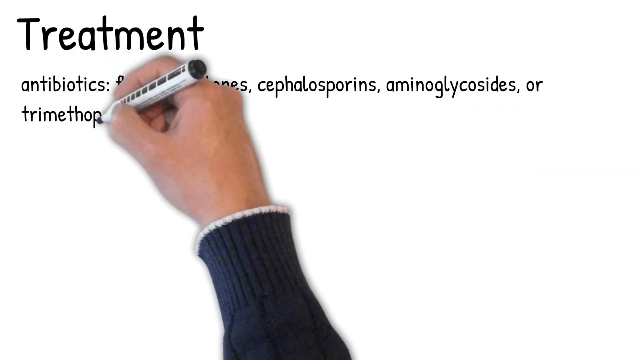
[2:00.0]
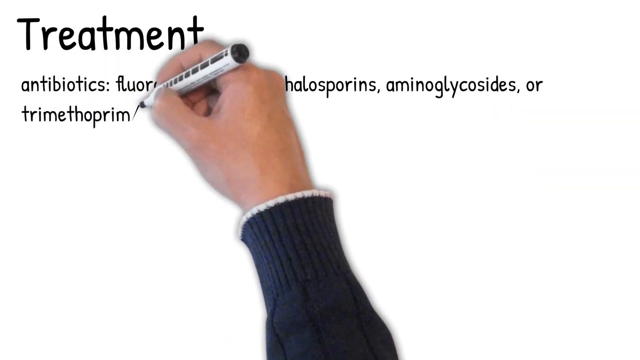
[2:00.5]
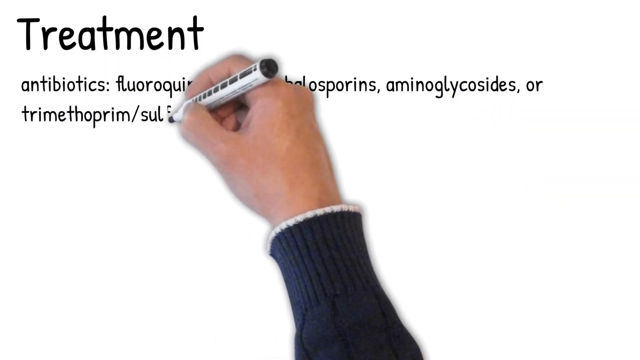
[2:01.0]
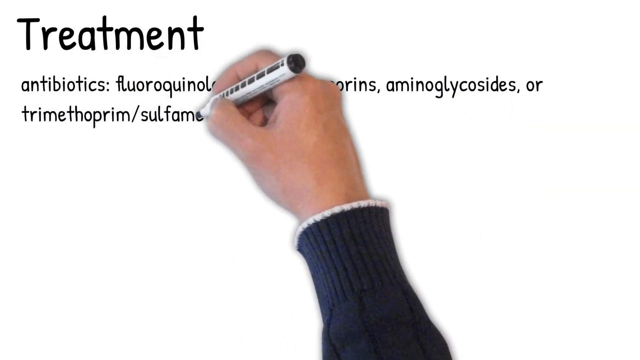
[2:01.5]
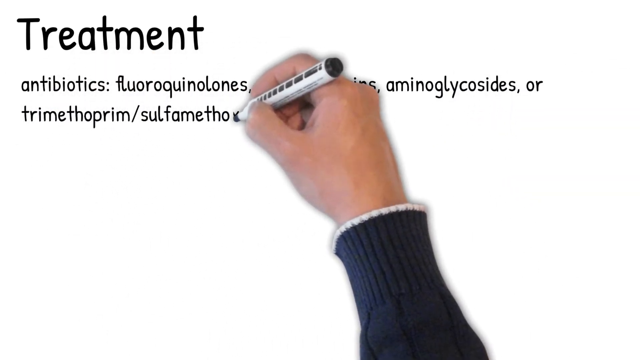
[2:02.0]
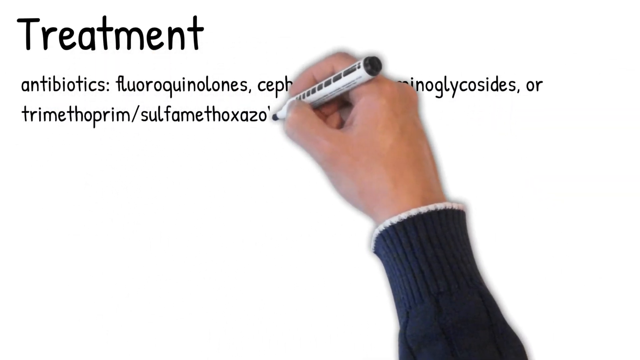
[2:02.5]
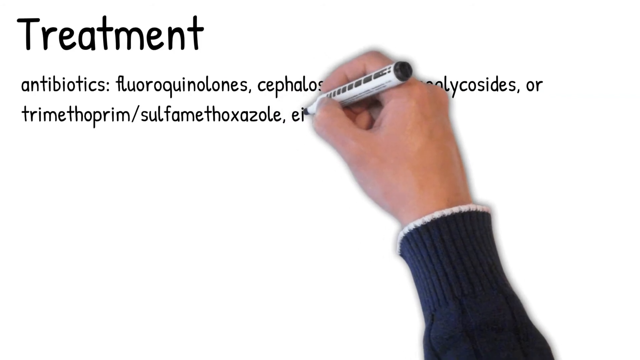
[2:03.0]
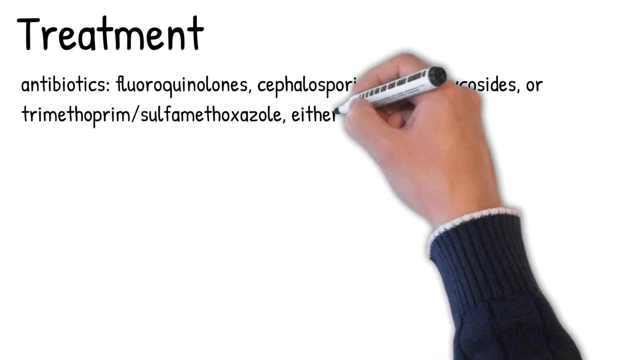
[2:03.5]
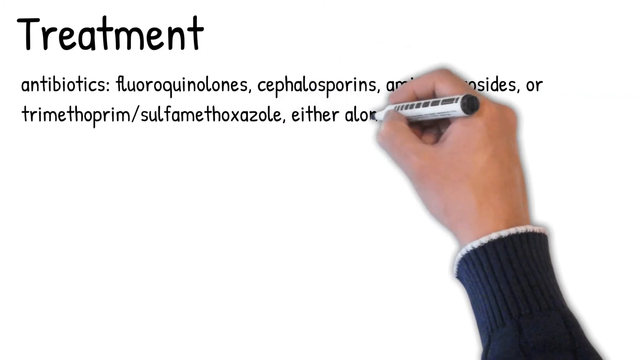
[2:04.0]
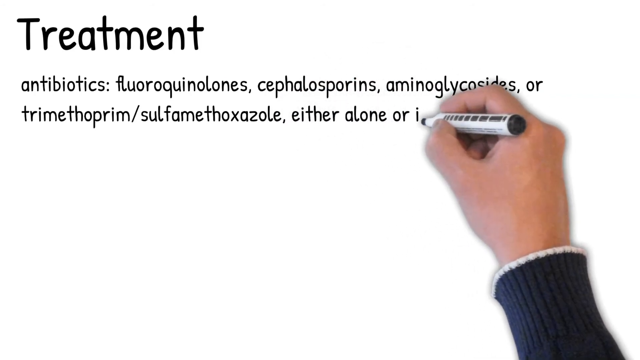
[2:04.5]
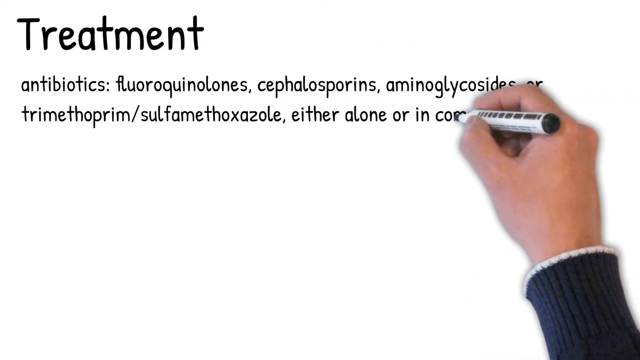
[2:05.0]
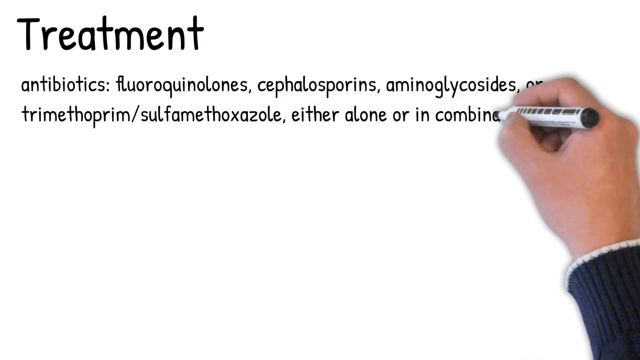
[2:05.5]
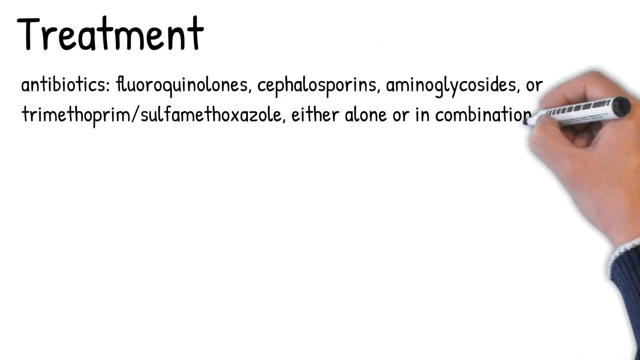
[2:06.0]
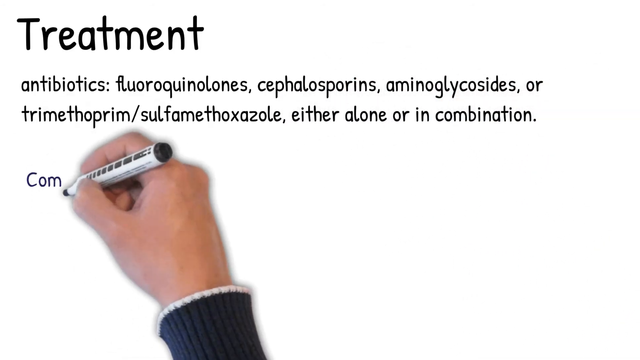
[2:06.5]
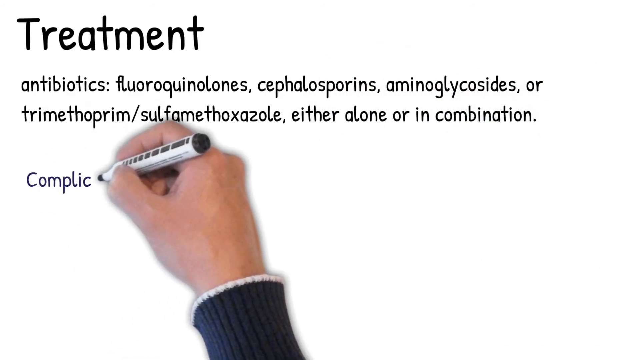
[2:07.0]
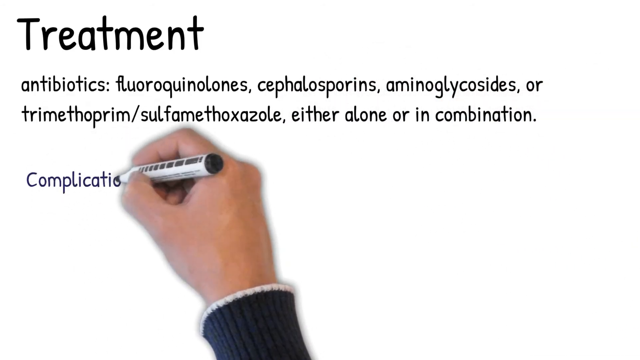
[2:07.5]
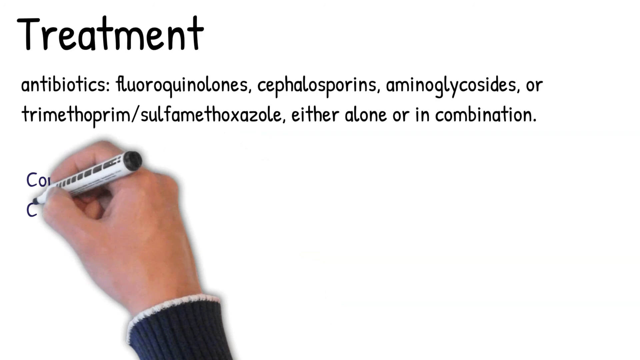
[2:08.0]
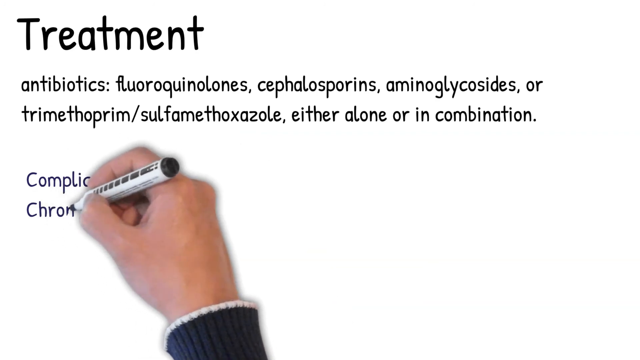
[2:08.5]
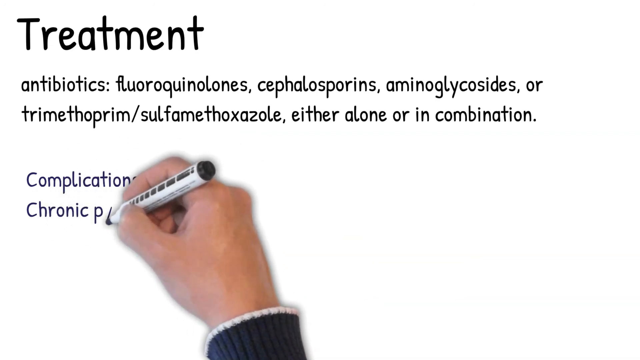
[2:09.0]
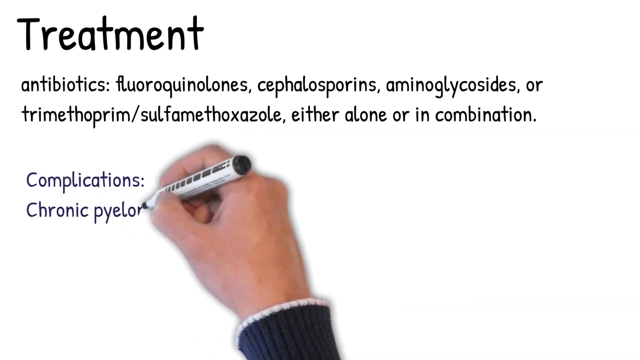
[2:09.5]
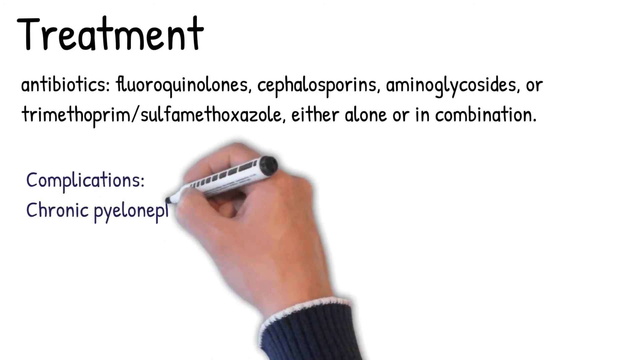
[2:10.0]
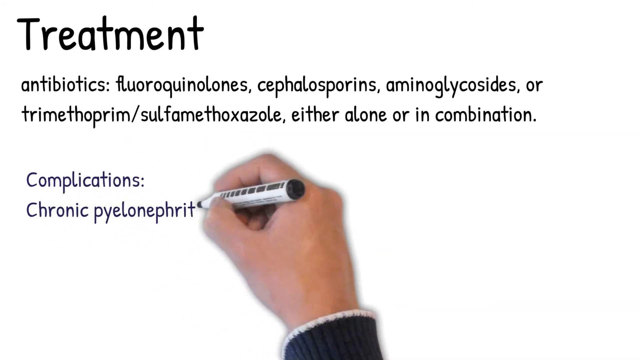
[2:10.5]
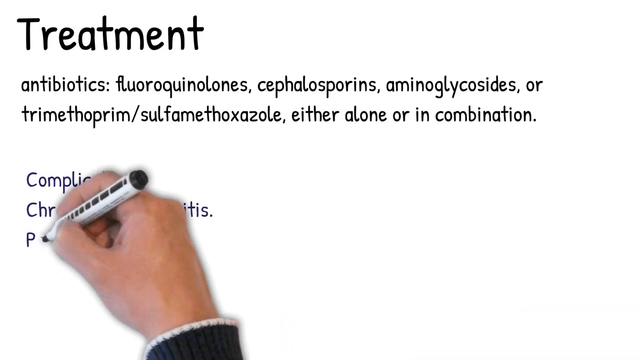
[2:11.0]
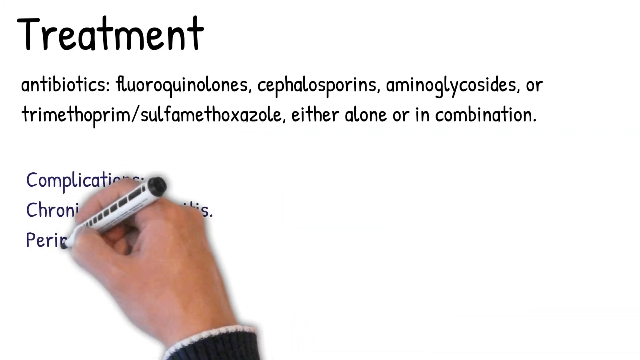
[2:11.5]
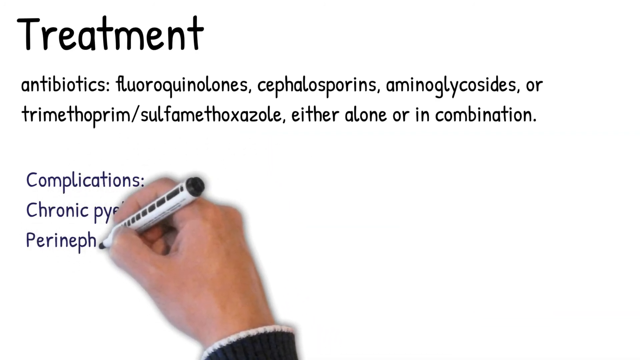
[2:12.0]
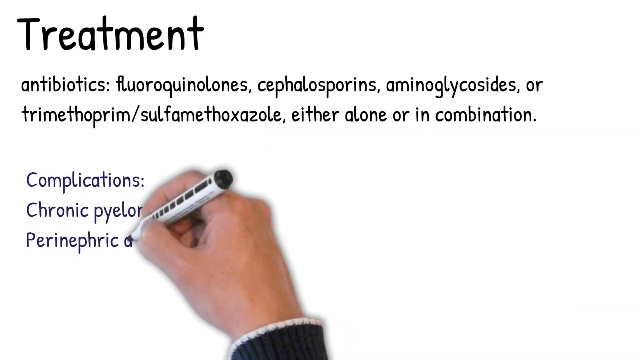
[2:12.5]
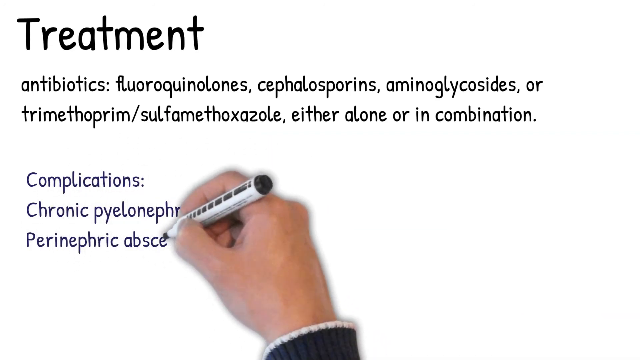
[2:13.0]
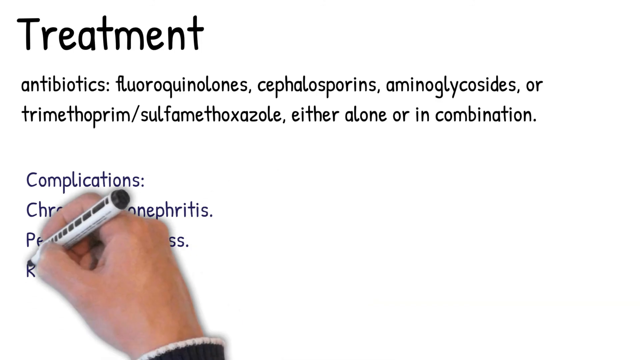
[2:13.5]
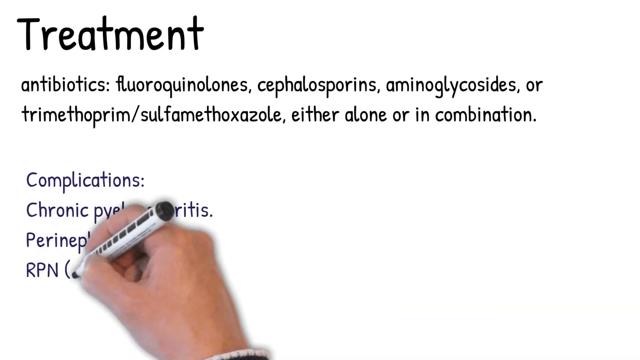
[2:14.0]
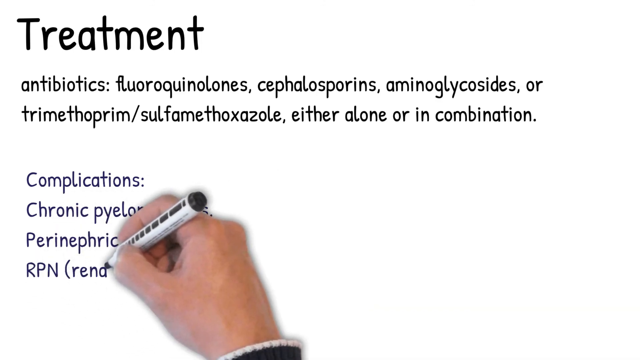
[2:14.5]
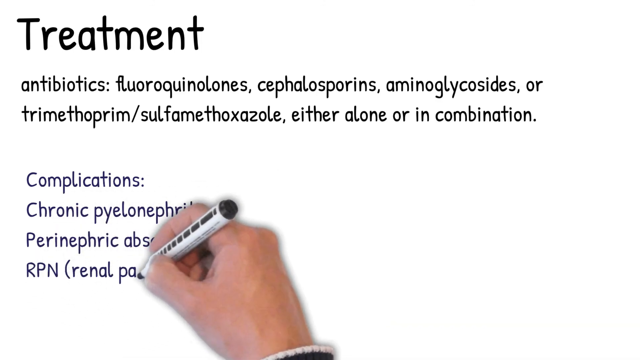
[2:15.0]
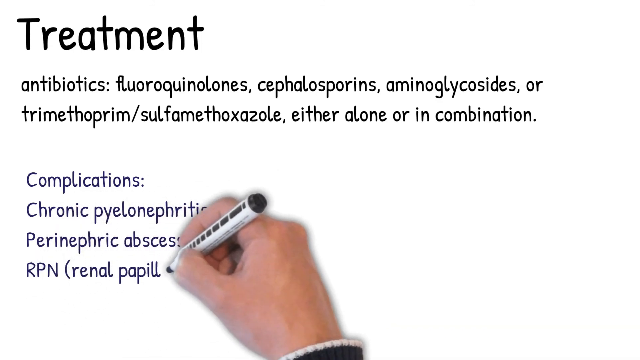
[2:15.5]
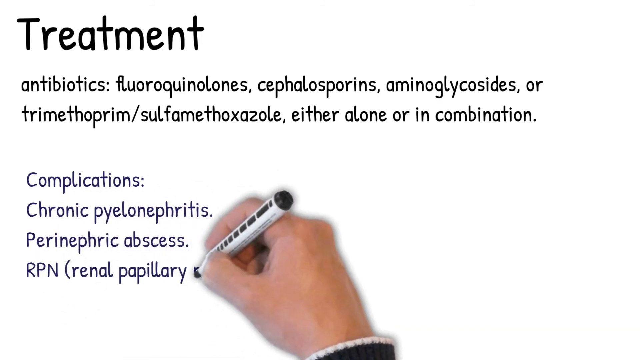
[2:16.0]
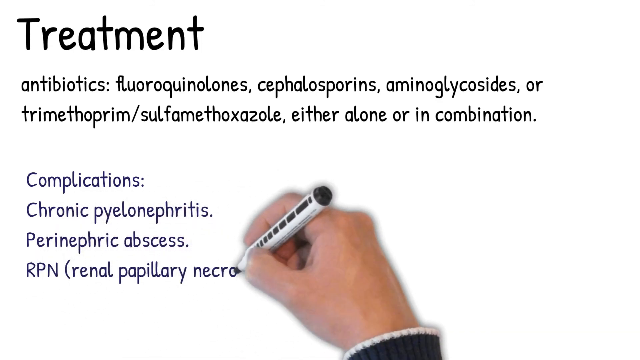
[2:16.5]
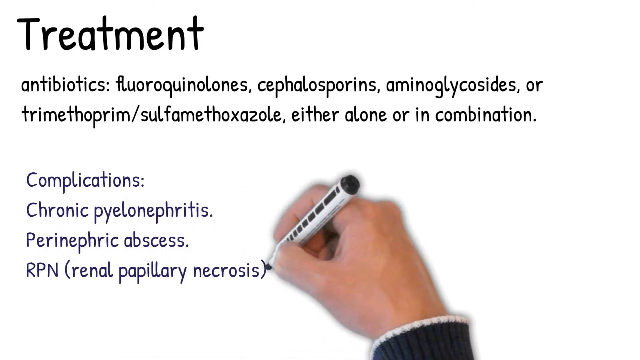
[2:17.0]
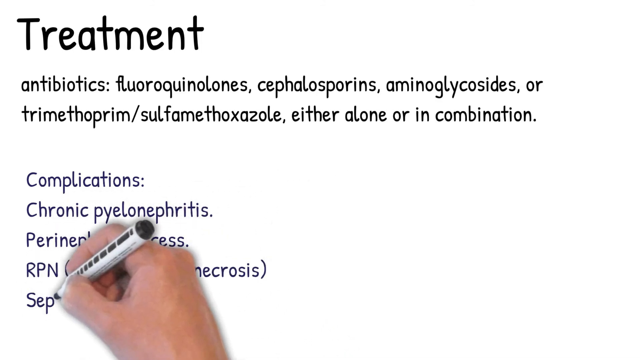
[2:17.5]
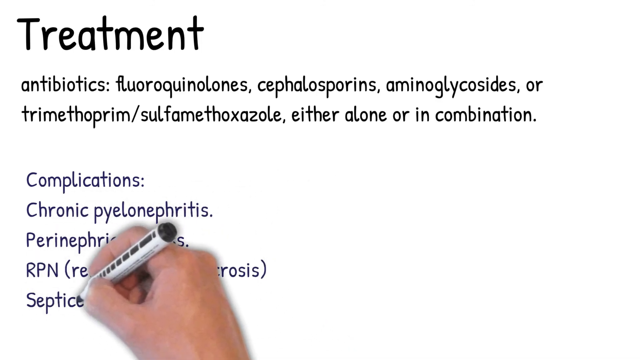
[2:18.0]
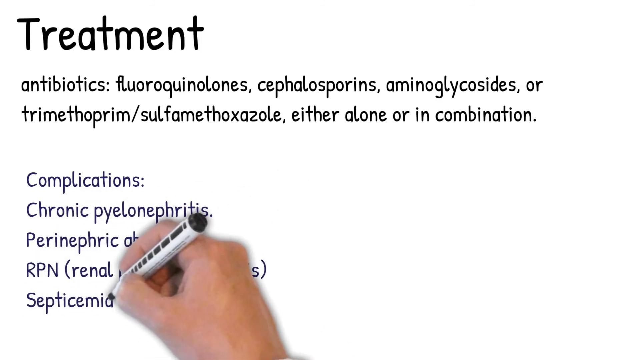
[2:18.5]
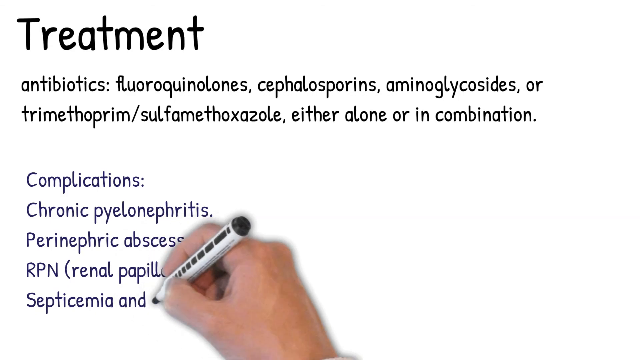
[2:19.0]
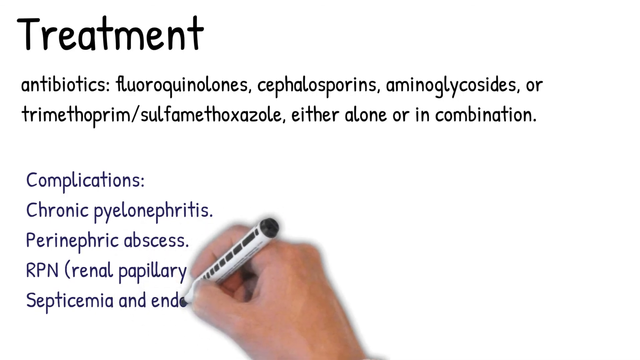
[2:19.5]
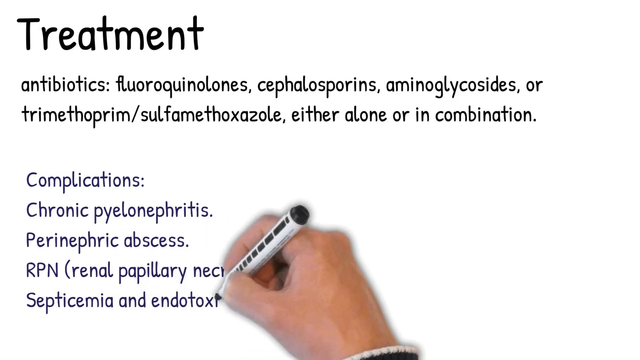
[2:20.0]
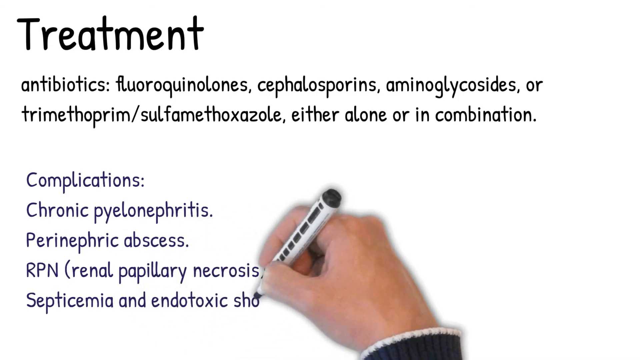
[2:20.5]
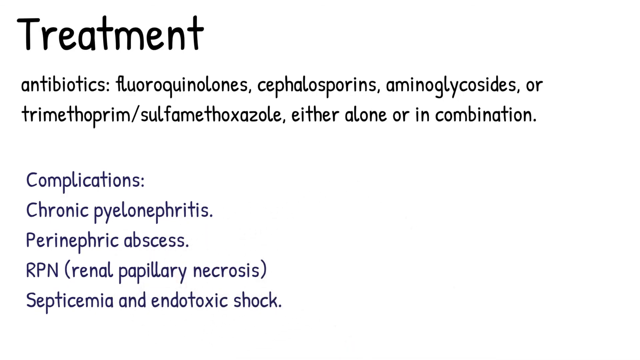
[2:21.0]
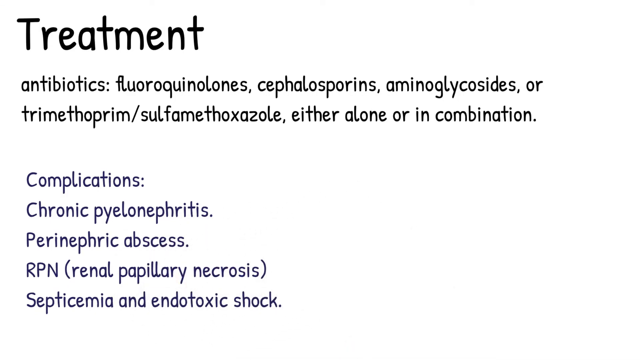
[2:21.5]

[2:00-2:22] In black on the board it says "treatment" and "antibiotics": "fluoroquinolones, cephalosporins, and aminoglycosides", followed by a drug name that is not clearly legible and "/sulfamethoxazole, either alone or in combination". Next comes "complications": "chronic pyelonephritis", and, somewhat hard to make out, "perinephric abscess", "RPN, renal papillary necrosis", "septicemia" and "endotoxic shock". The man writes all of this rapidly with a white pen with black on its side. "Treatment" is in large black letters, the antibiotics are in smaller black letters, and the complications are in medium-sized black letters. He wears a dark blue sweater with white trim. The video ends after the complications.